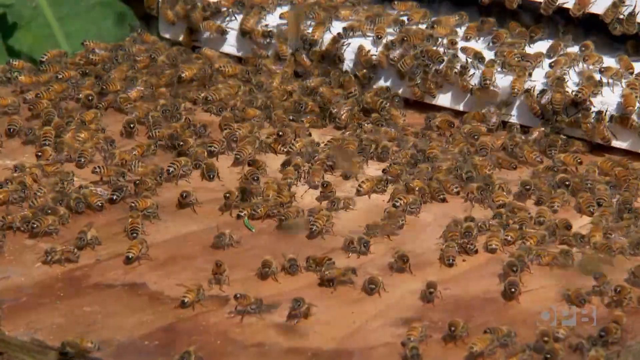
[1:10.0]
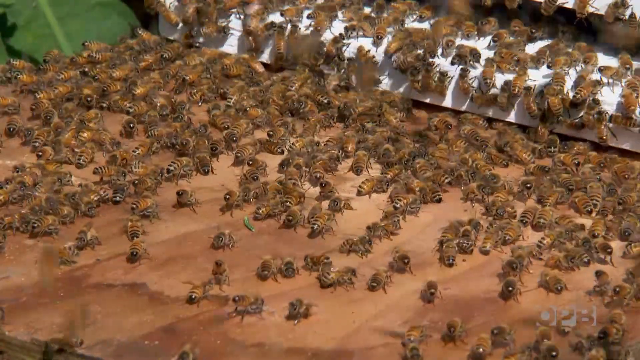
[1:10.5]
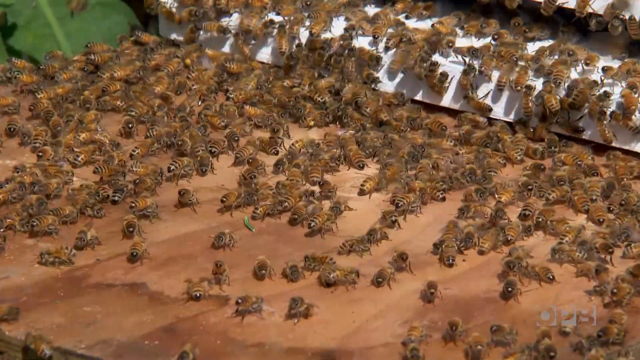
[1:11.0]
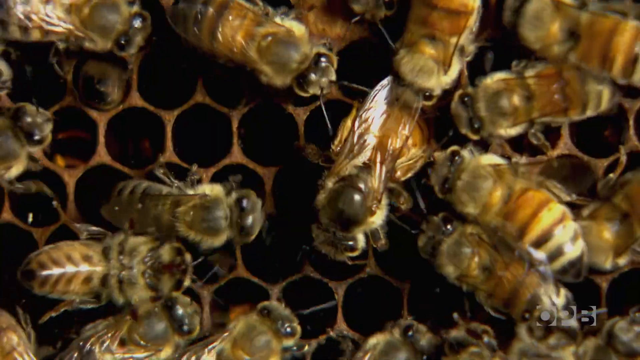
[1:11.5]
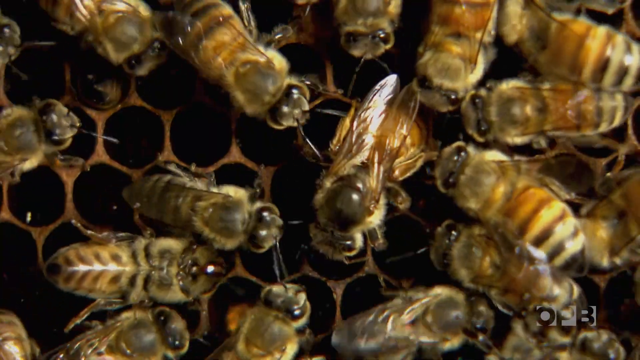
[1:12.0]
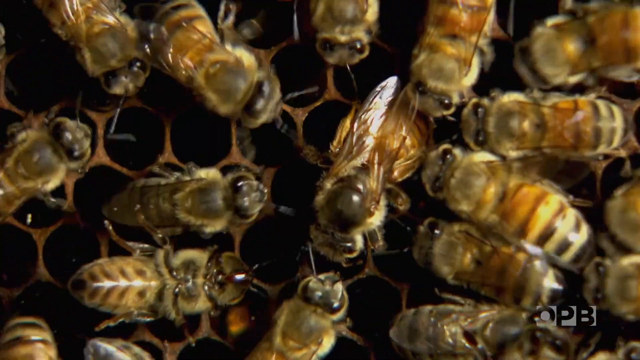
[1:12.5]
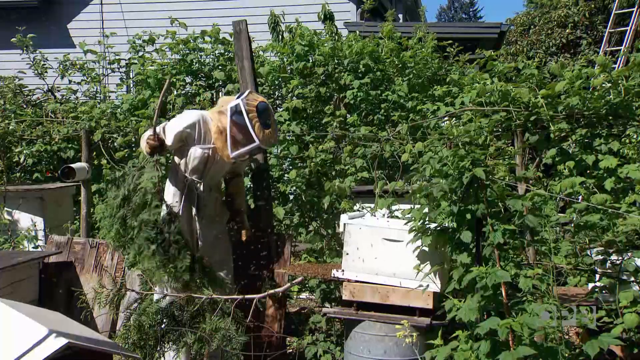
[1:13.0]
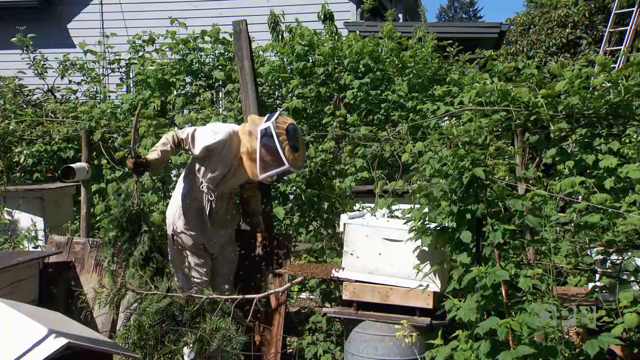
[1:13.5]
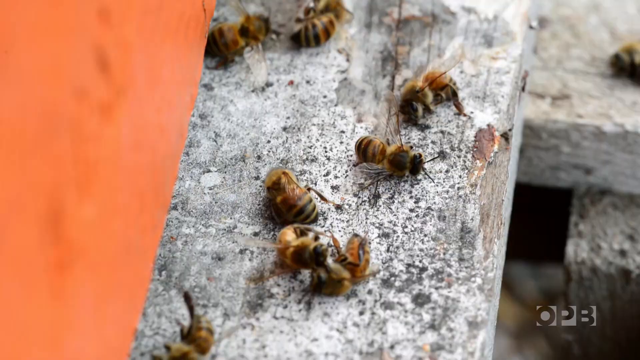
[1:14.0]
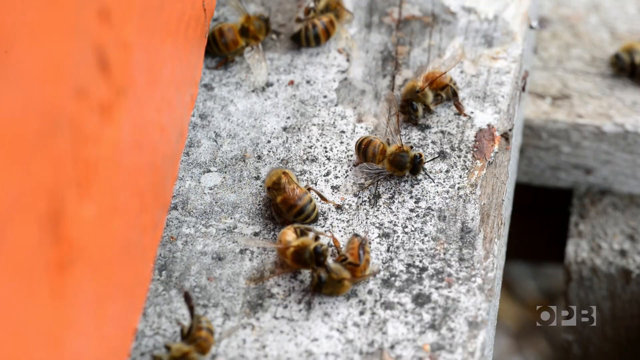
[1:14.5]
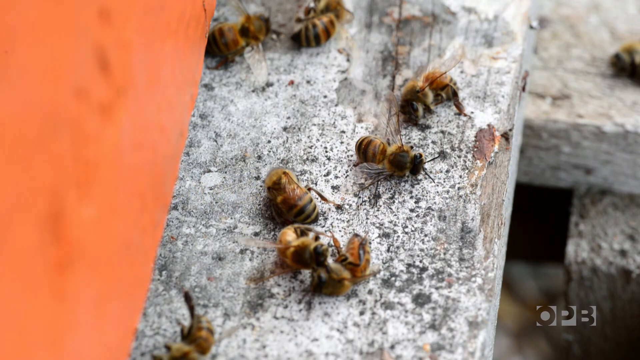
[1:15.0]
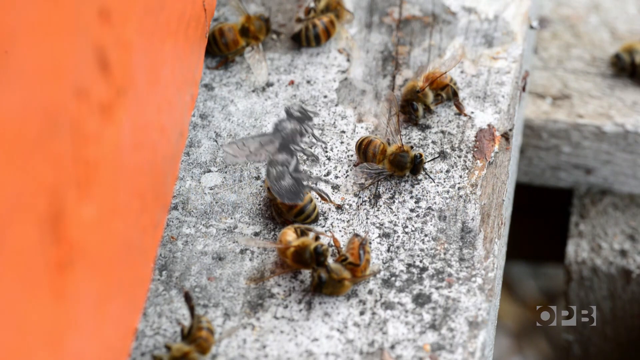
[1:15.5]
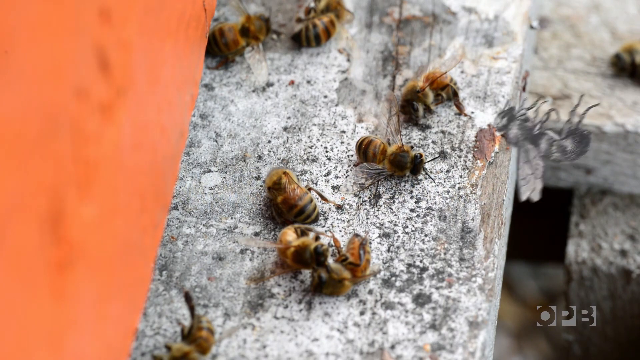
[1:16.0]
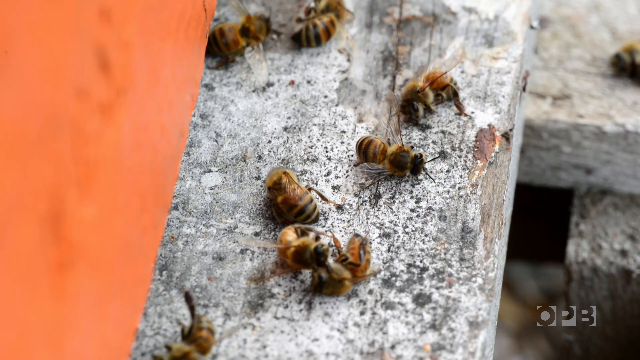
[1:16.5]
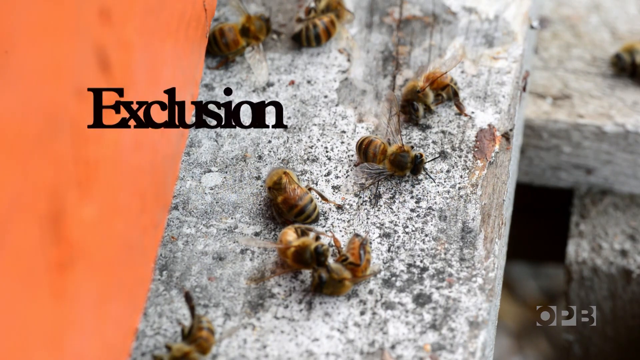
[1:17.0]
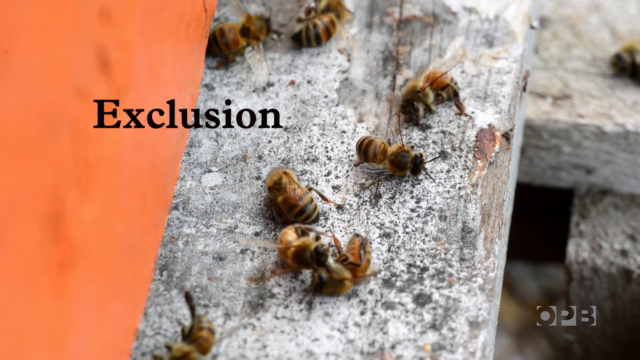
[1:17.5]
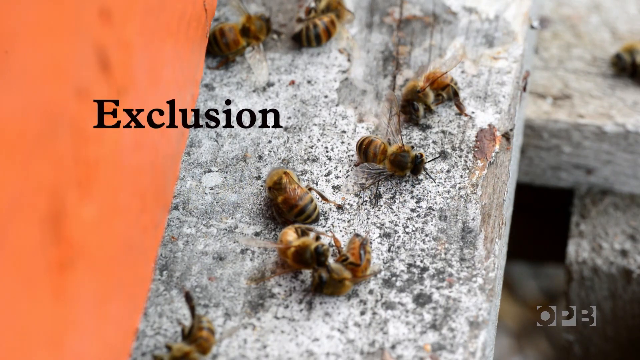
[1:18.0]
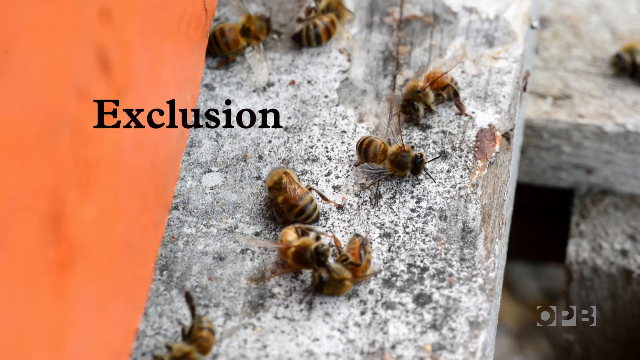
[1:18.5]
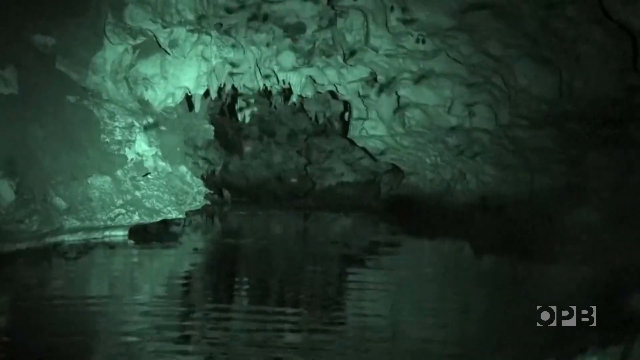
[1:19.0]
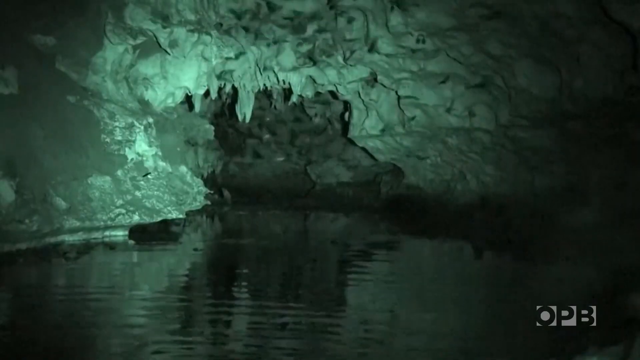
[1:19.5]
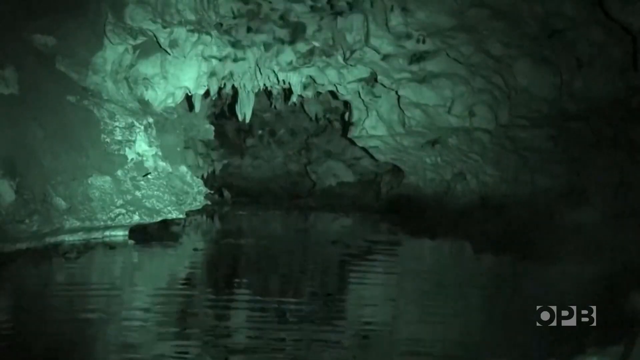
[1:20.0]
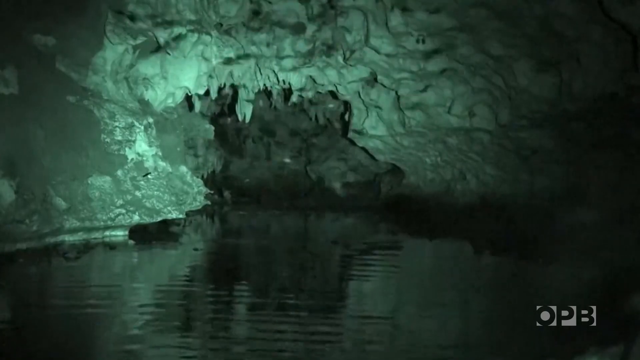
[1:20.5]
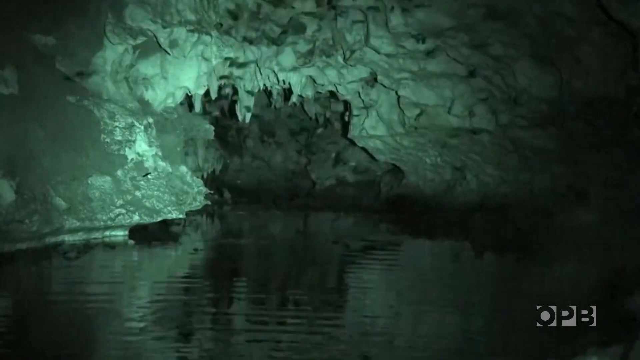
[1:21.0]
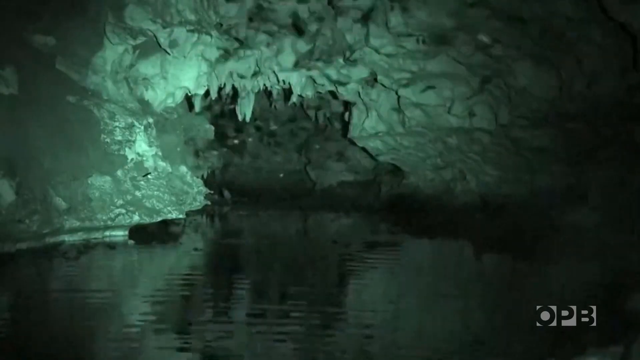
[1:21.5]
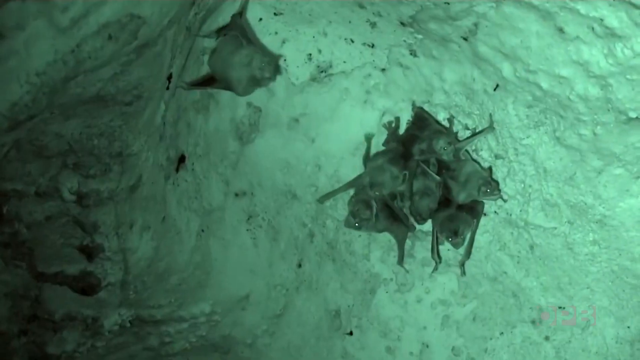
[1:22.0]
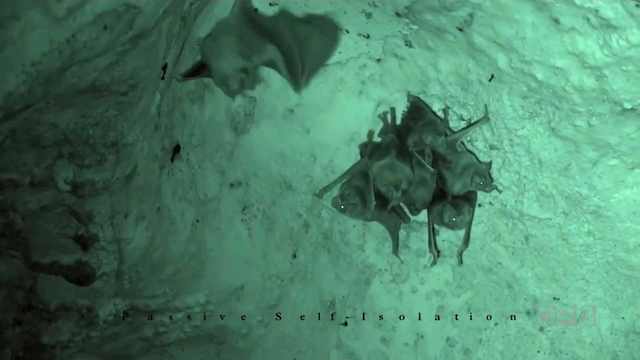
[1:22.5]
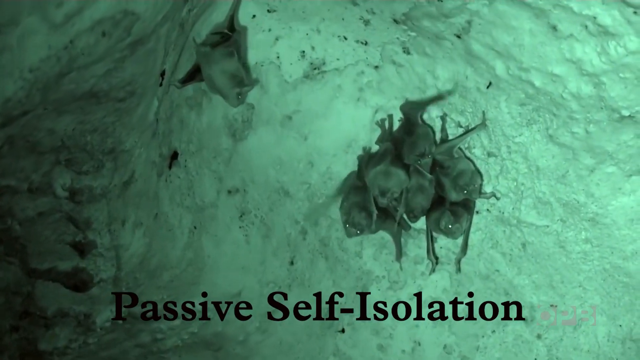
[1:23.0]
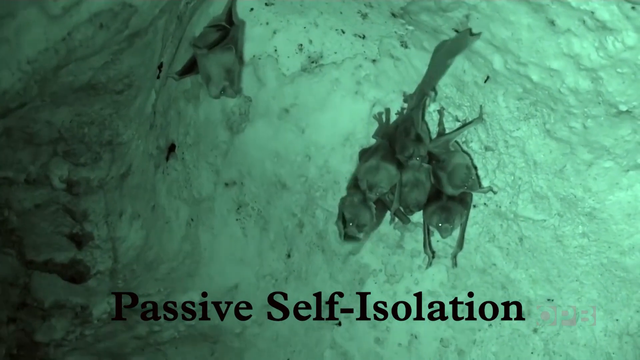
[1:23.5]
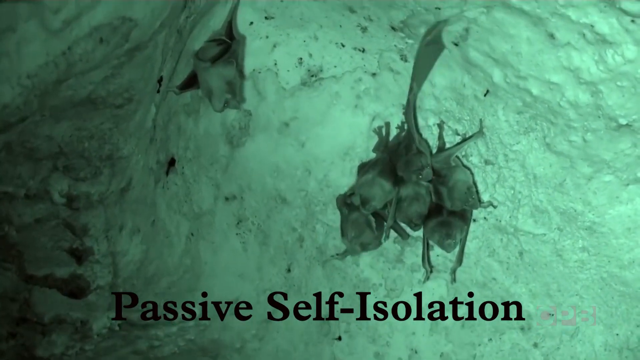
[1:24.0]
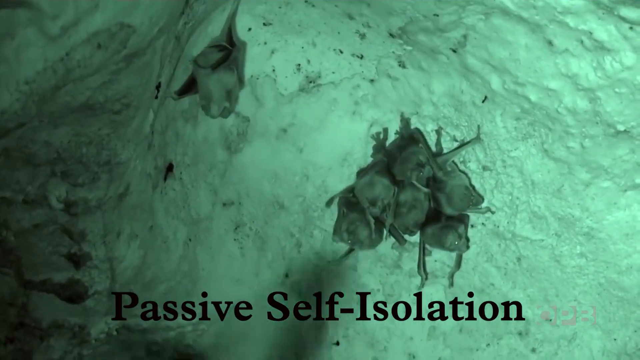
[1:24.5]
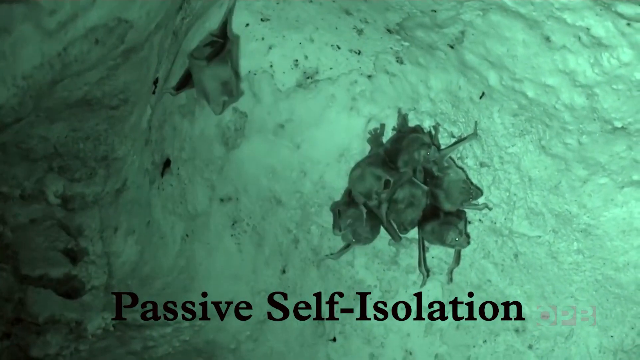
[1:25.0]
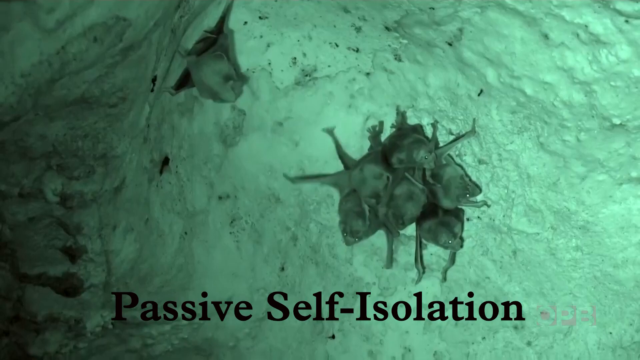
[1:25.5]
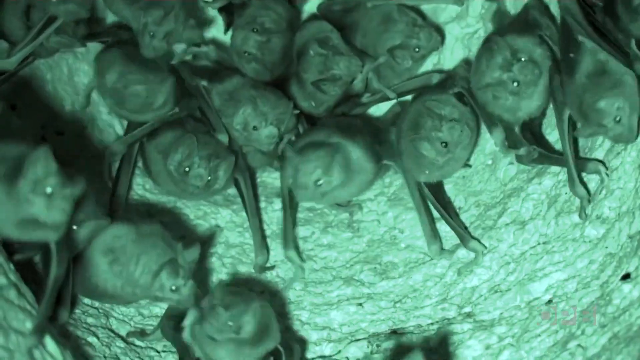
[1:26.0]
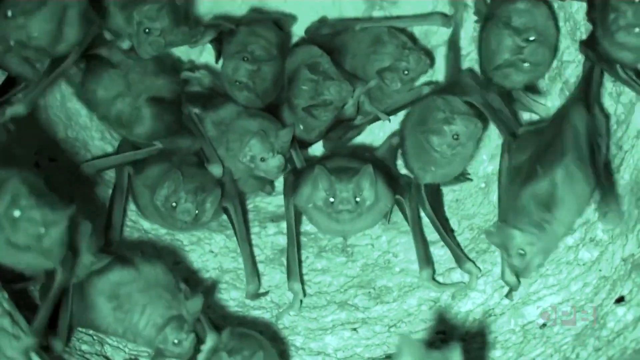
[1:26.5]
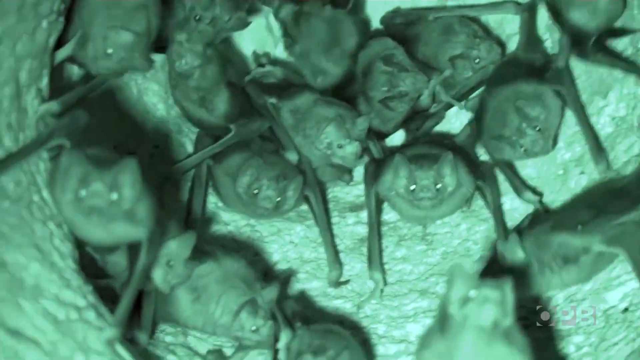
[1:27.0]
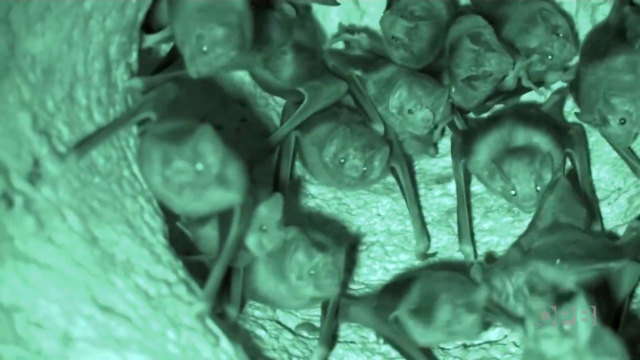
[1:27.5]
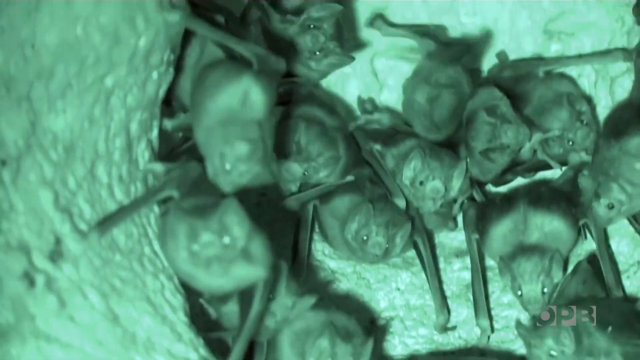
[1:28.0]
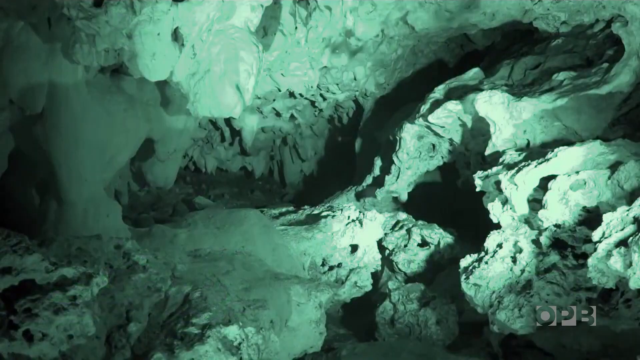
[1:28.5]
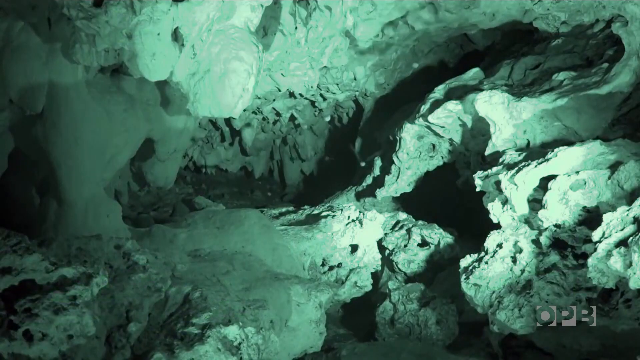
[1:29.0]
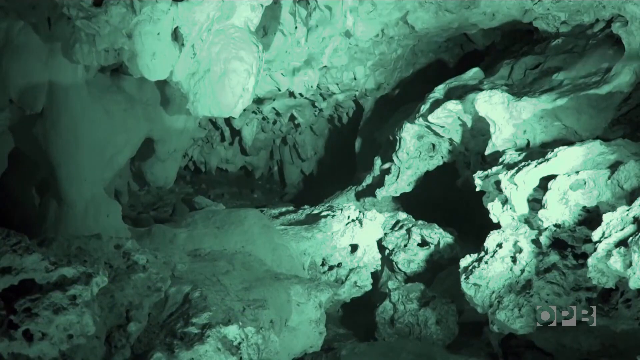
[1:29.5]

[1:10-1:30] Honeybees are shown, along with a beekeeper and a lot of dead bees, with the word "exclusion" on screen. The scene moves to a cave with water, apparently at night. The words "passive self-isolation" appear as a bunch of bats congregate and fly in the air. One bat is all by itself while the others group together.